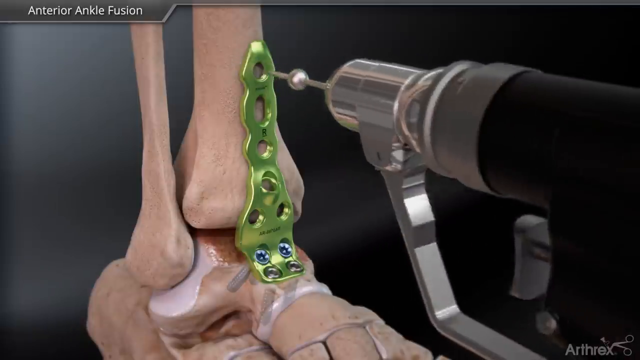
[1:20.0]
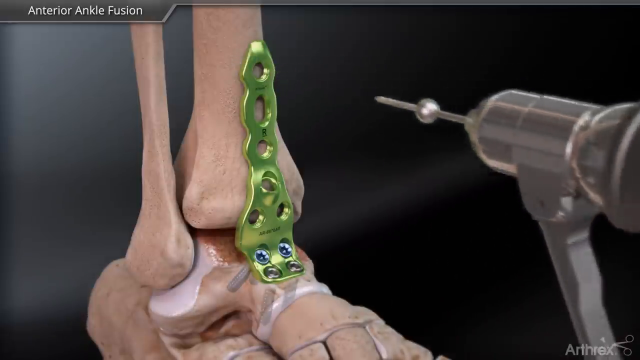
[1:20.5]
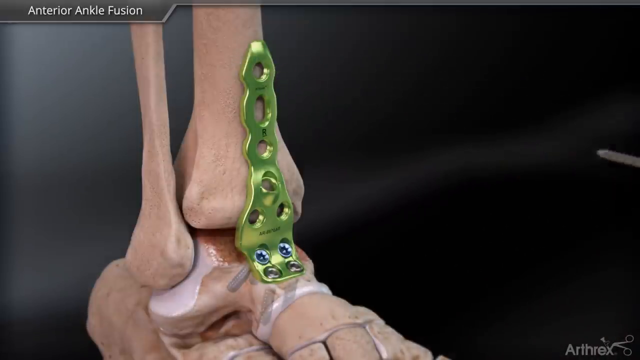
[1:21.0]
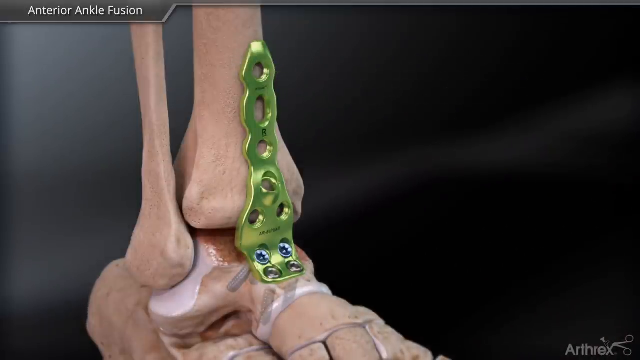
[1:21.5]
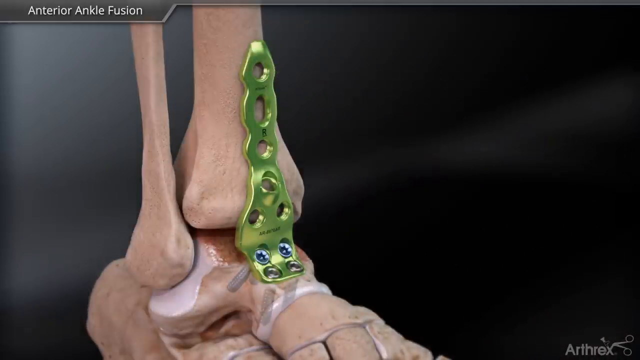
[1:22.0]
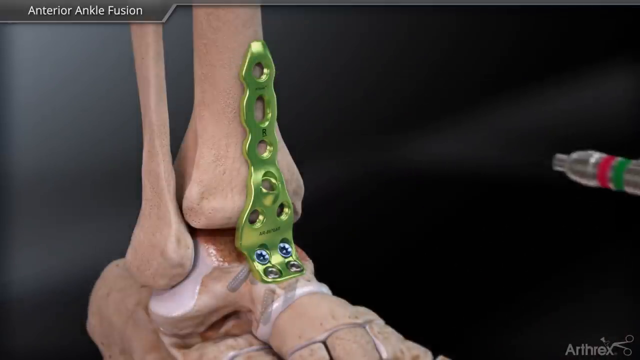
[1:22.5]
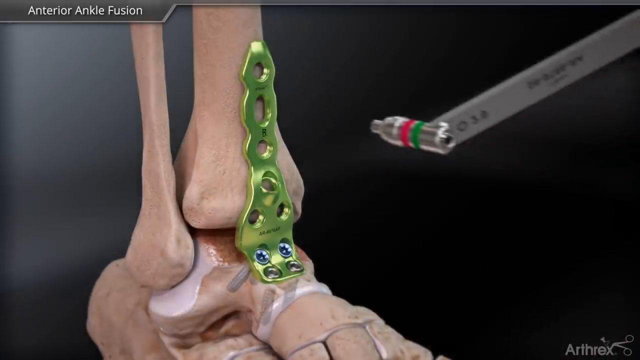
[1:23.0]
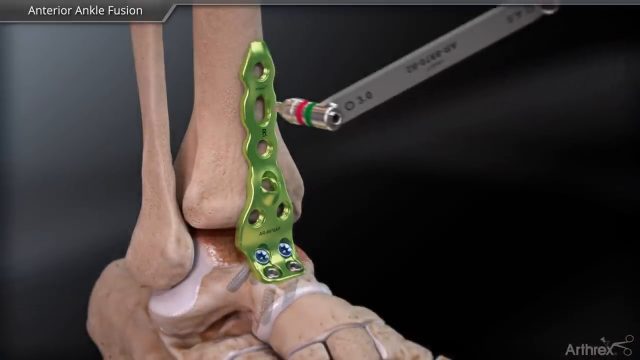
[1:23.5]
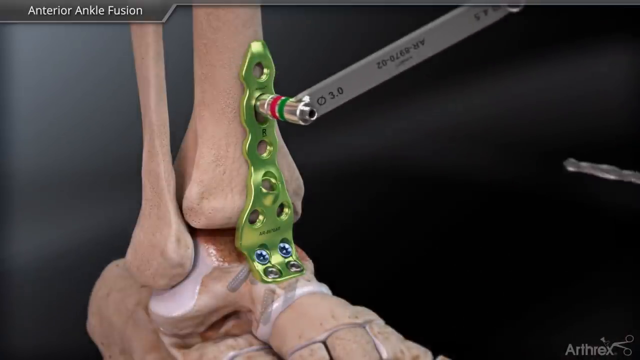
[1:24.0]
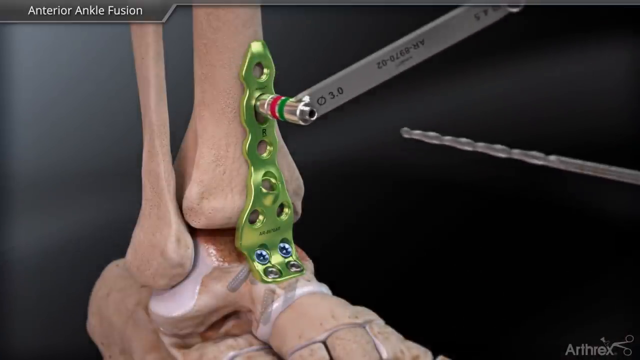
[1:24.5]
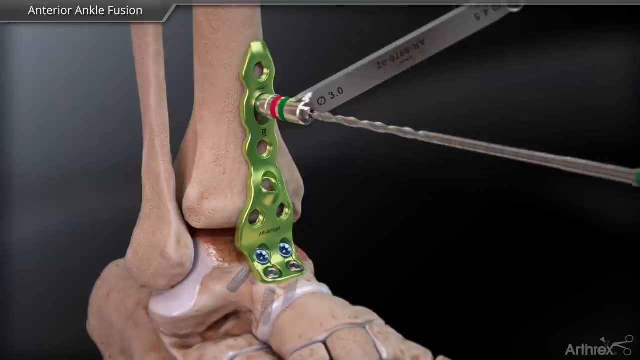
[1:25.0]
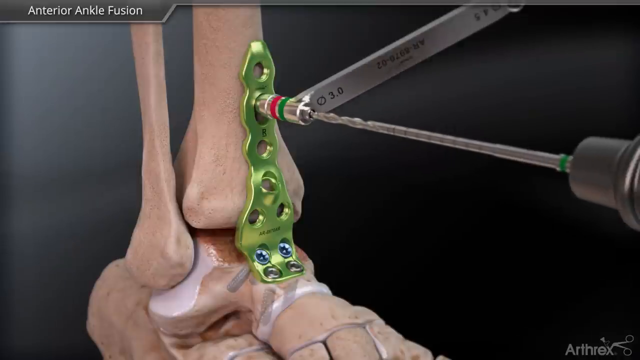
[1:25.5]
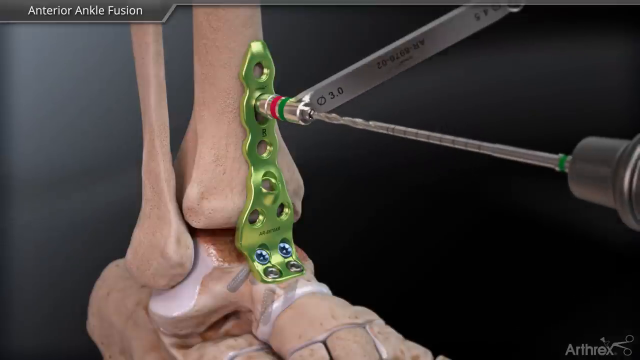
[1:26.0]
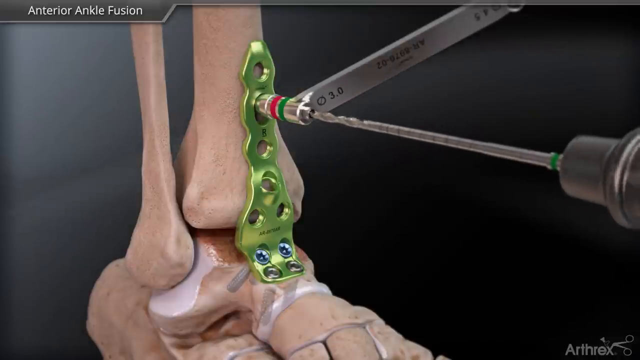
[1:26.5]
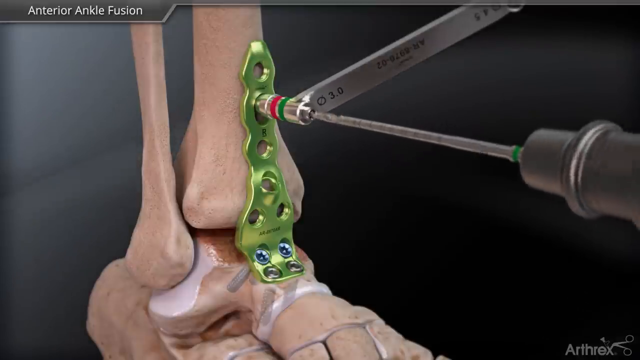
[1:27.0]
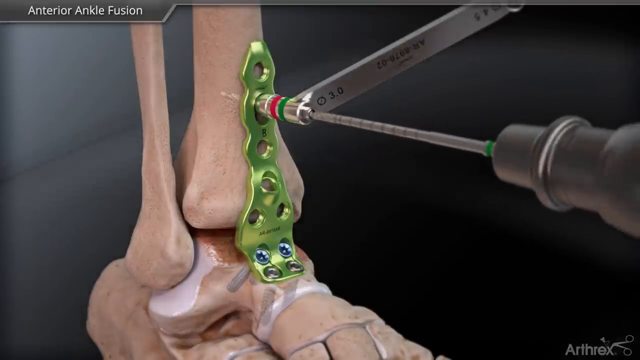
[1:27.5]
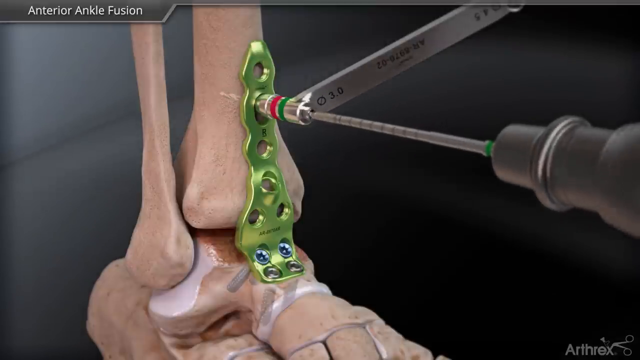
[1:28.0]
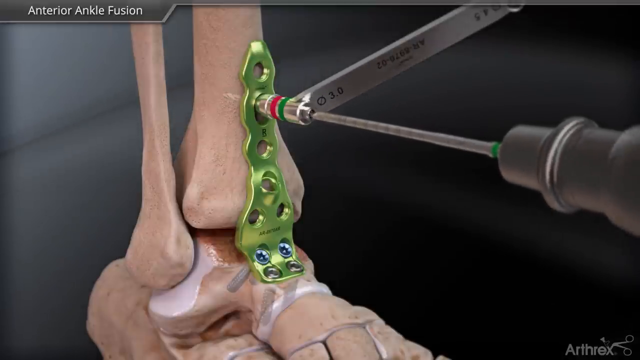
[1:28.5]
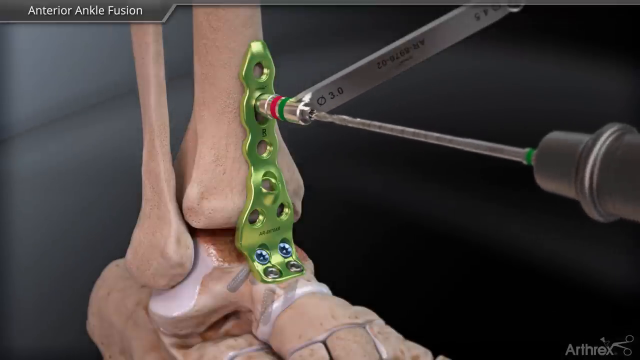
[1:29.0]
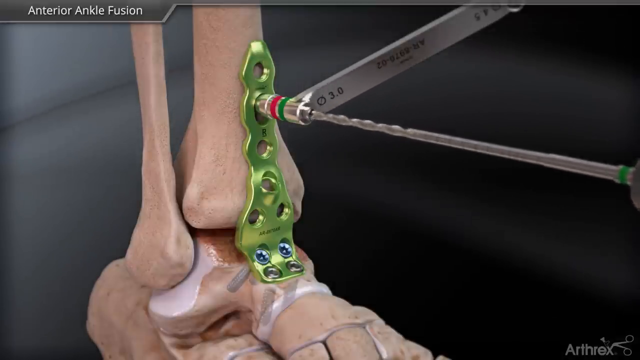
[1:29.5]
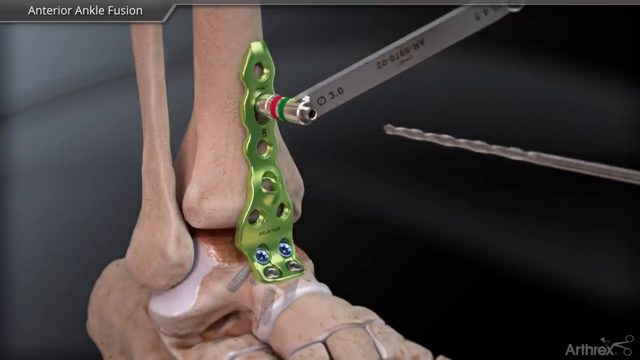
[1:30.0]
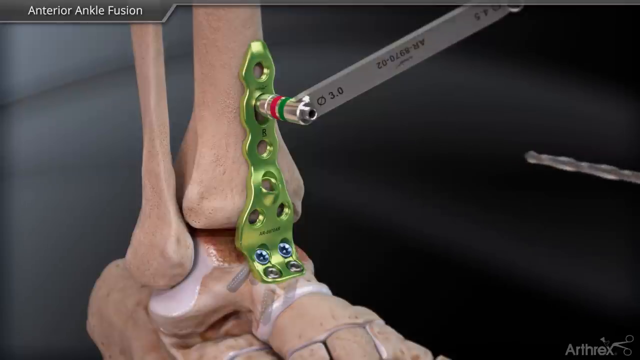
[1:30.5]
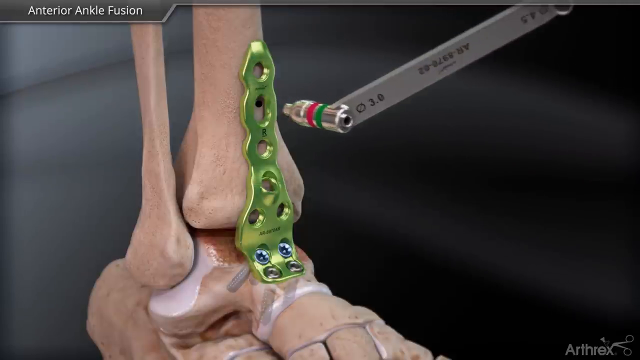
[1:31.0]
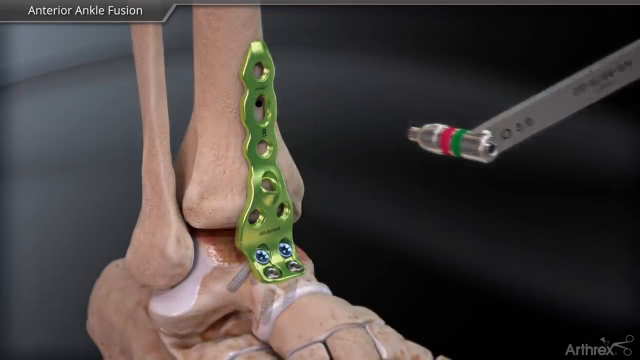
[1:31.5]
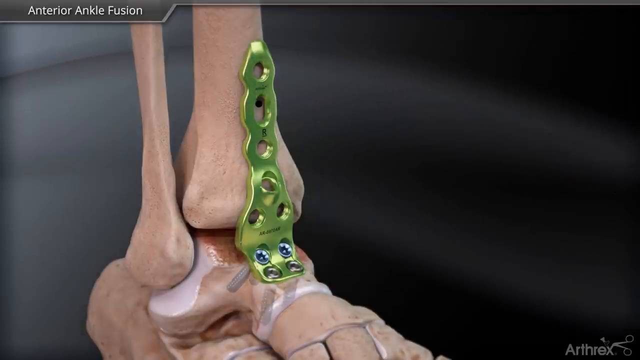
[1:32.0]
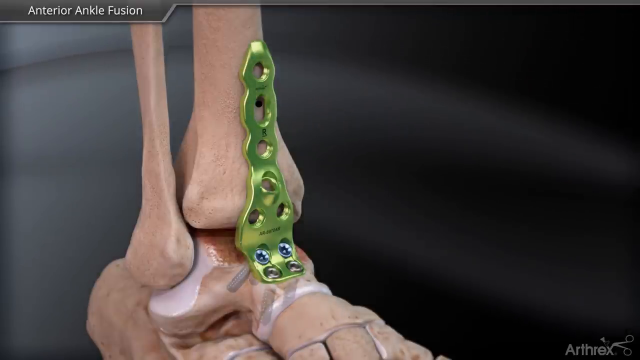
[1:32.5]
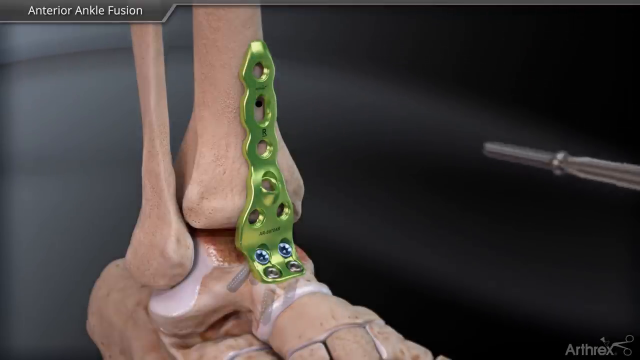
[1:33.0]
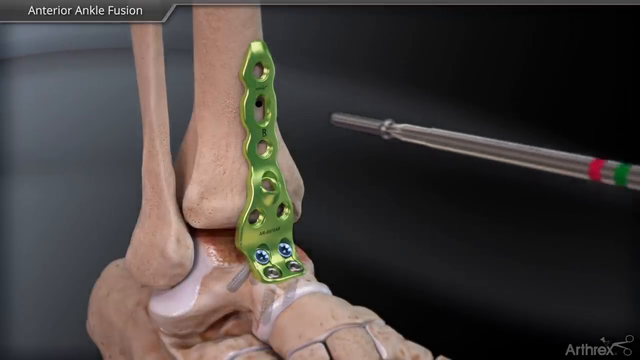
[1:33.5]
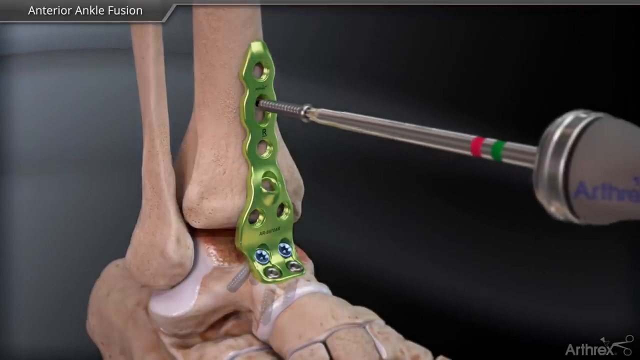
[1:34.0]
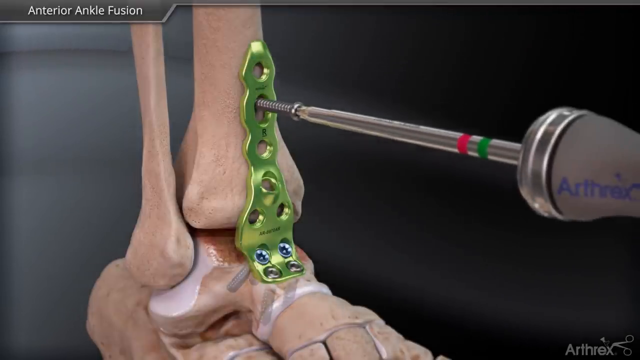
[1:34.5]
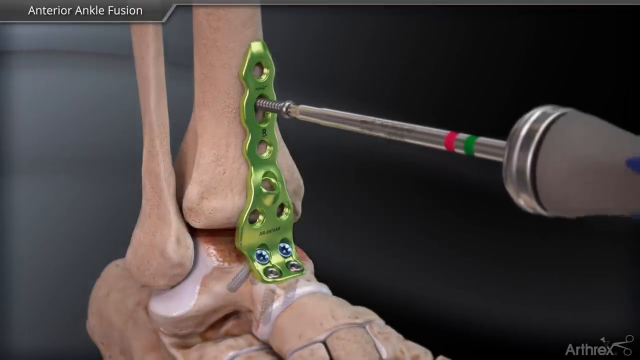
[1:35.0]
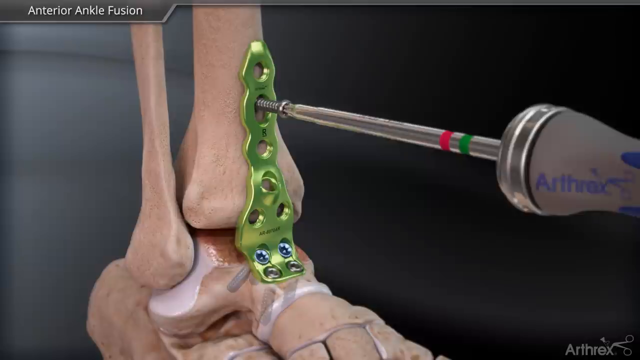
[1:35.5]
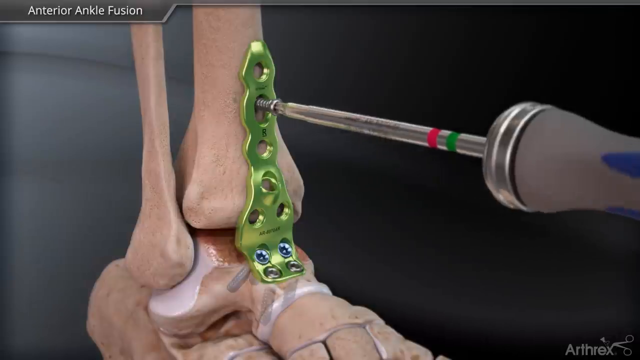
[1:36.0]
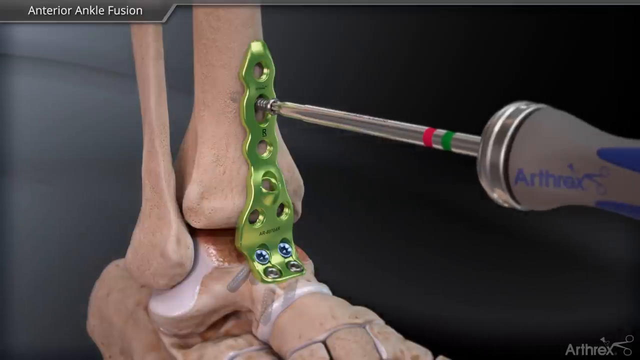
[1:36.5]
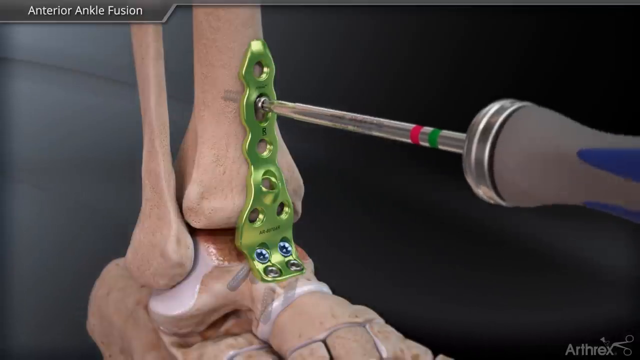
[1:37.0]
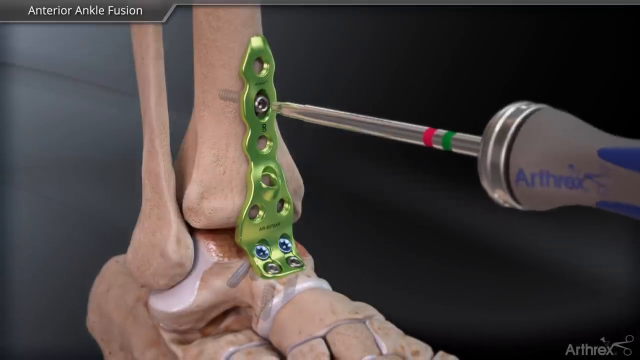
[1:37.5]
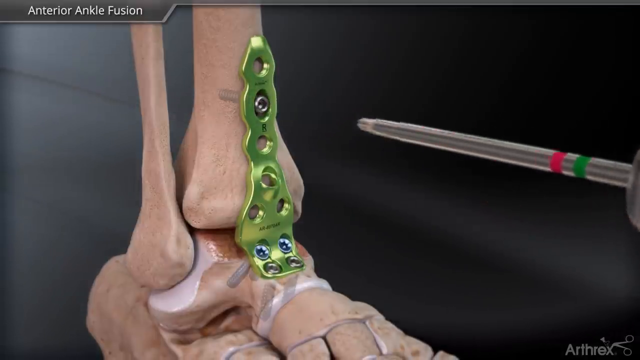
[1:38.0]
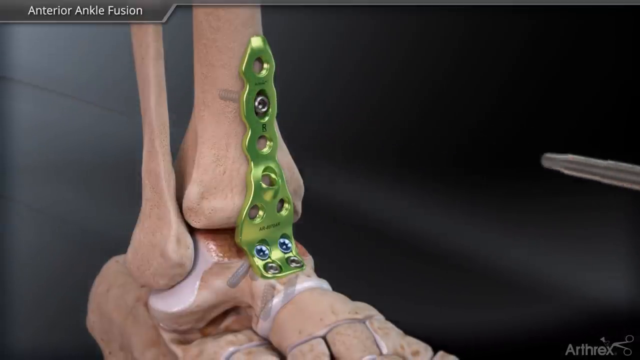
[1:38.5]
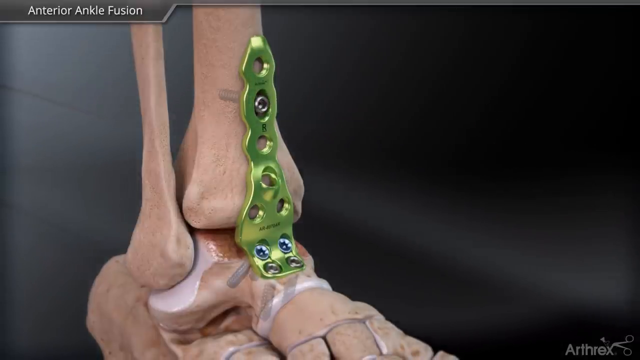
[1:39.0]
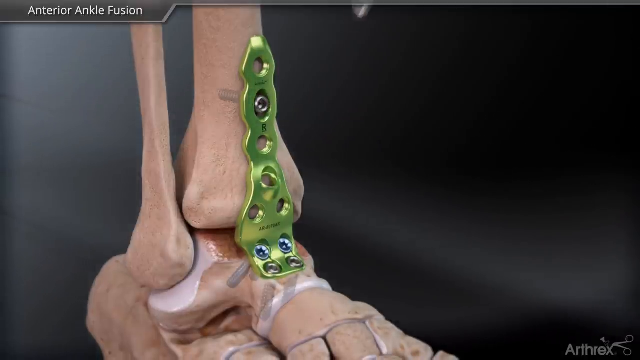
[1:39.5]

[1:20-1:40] The top pin is removed from the device. Another stabilization piece, similar to the ones placed on the bottom before the screw was placed in, is put inside the second hole from the top, and a very large drill bit is again inserted inside it. Numbers are visible on the other tool being used to help stabilize the instrument inside the bracket. Inside the bottom, the top of the drill head is visible, showing where it sits and how far it goes into the bone. The drill bit and stabilization instrument are removed, leaving a dark hole on the bone surface. A screw is inserted and screwed in clockwise, and the back of the screw is visible inside the bone.